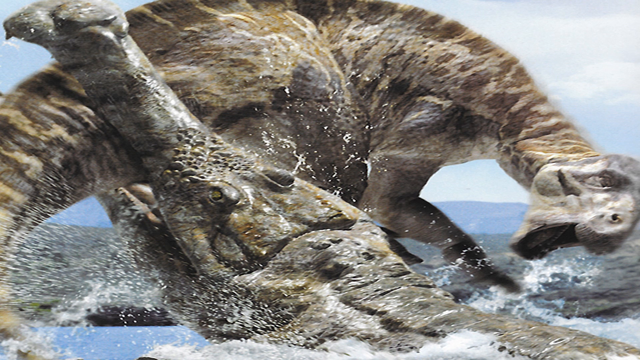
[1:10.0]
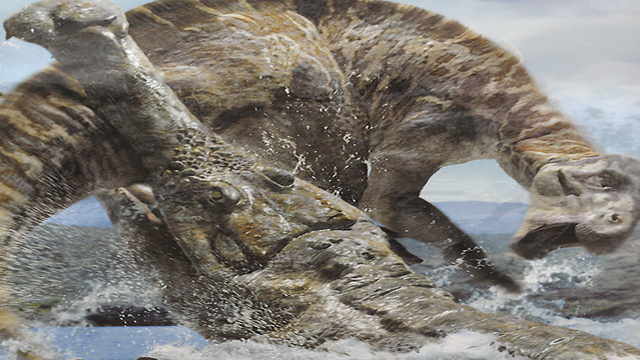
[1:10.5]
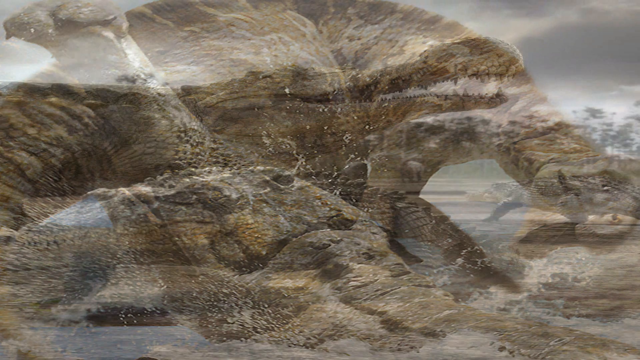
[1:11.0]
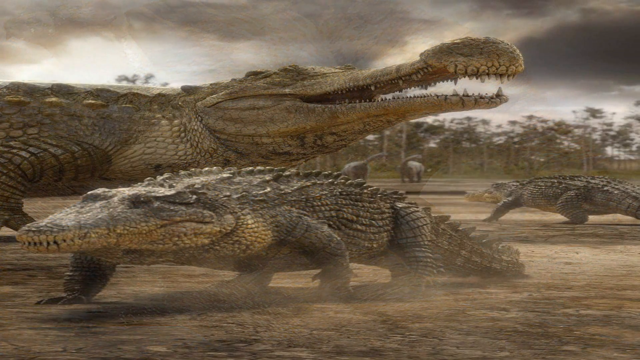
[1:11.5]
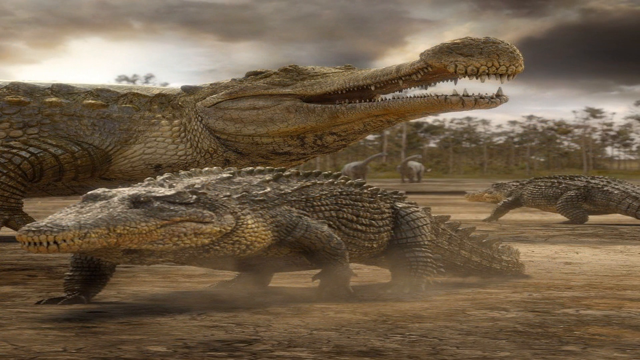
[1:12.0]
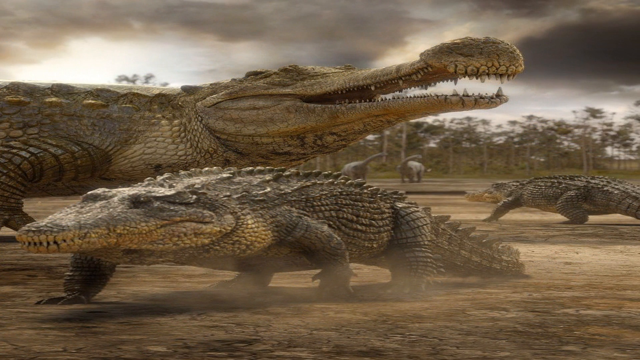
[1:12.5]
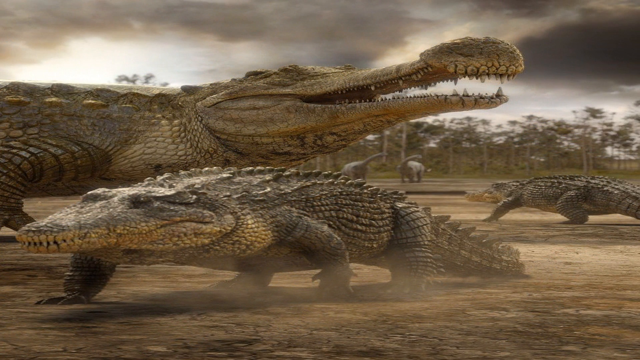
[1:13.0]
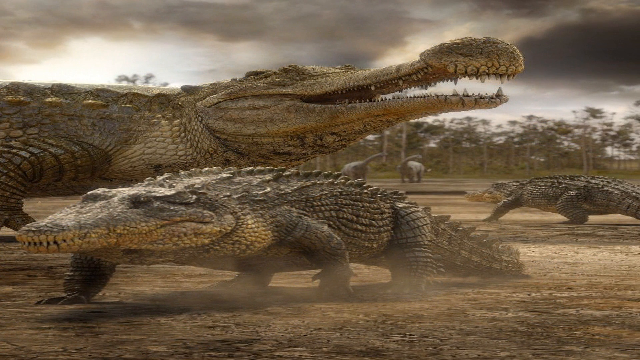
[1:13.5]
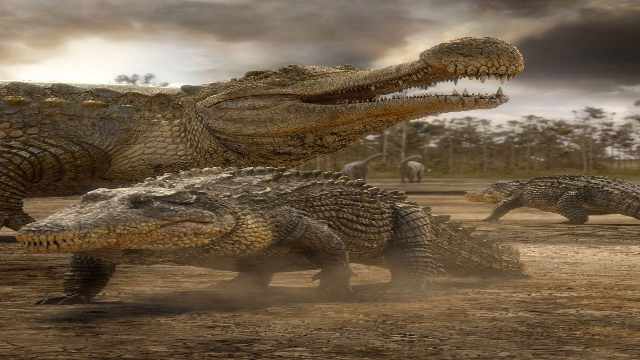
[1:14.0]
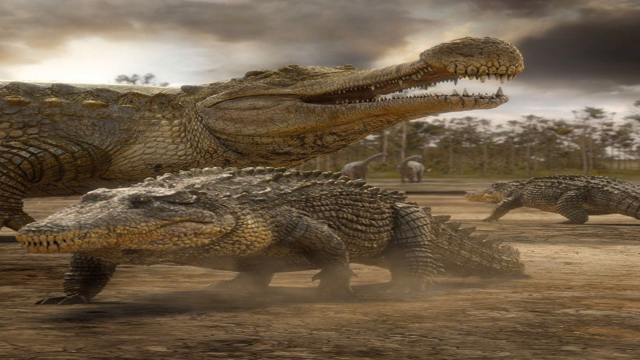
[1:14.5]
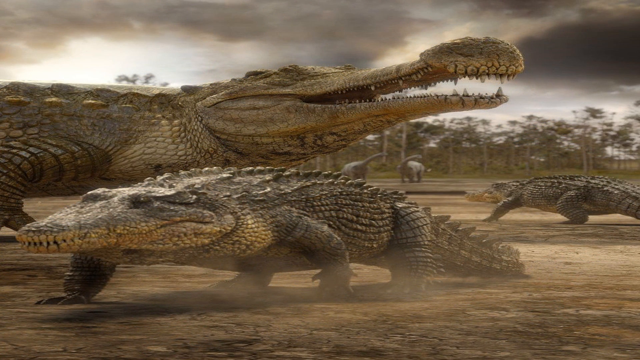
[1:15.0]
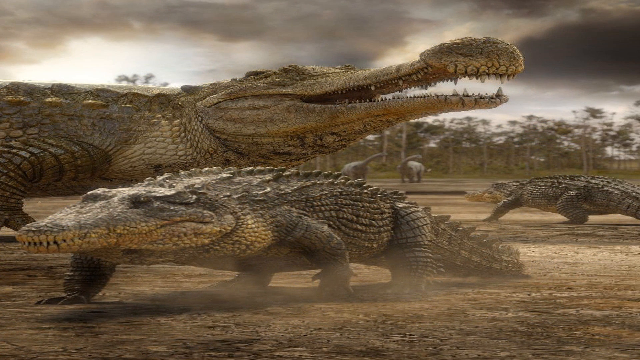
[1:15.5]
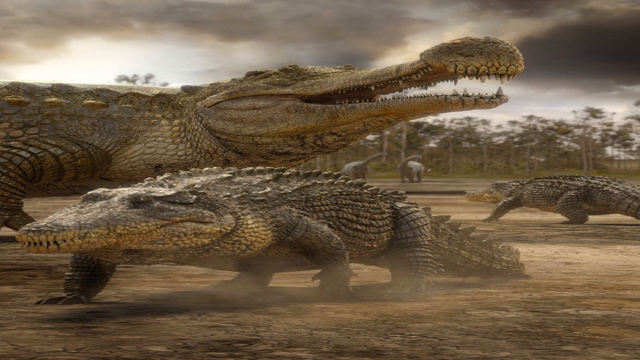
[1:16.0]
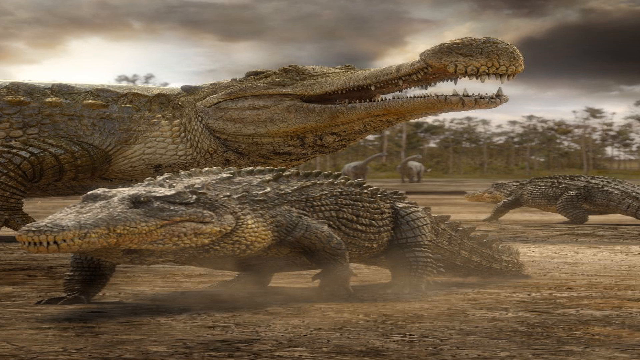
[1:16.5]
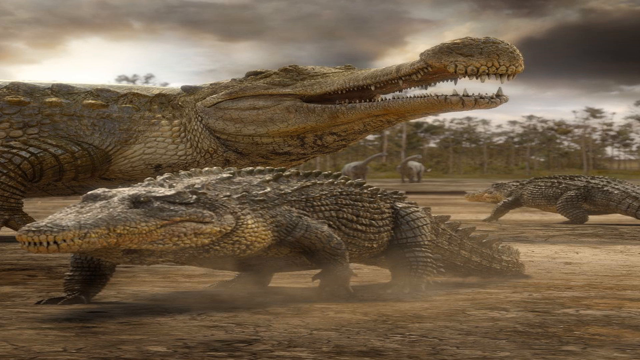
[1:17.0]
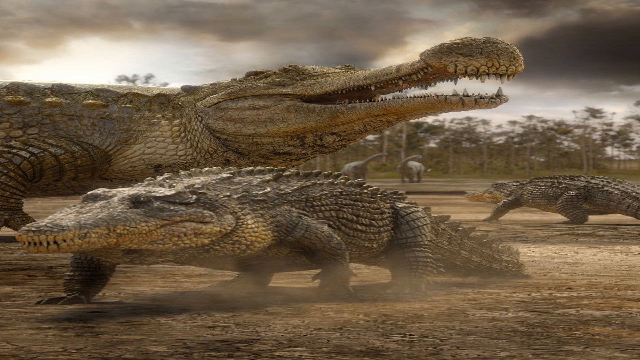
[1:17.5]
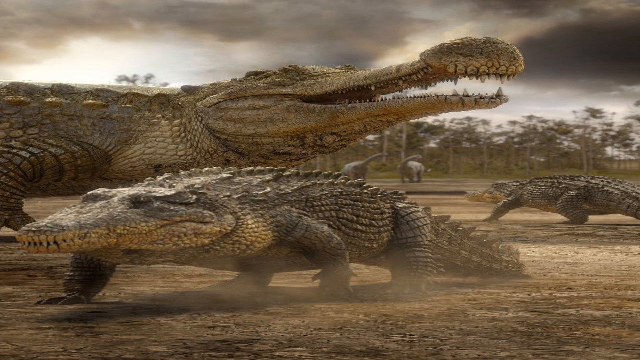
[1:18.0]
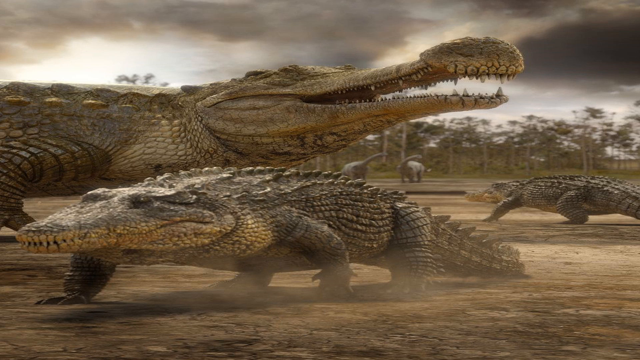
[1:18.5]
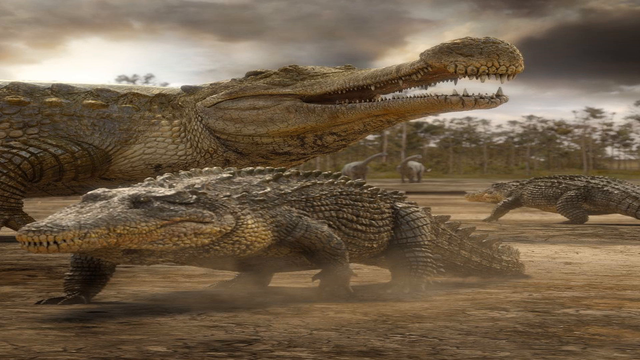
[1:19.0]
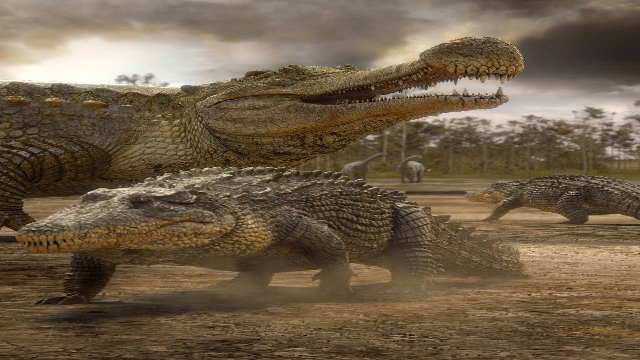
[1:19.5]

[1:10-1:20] The drawing shows the crocodile coming up out of the water and biting down on the tail of what appears to be some sort of dinosaur that has come down into the water. The haunch of the dinosaur's back leg is visible to the right of the crocodile's head, and the upper shoulder and neck of the dinosaur are also visible, in pale brown, cream and tan colors; they do not quite match the design on the tail. The still image then changes back to the still image of the small crocodile walking off the left of the frame, up underneath the head, apparently, of the large crocodile, which is walking behind it.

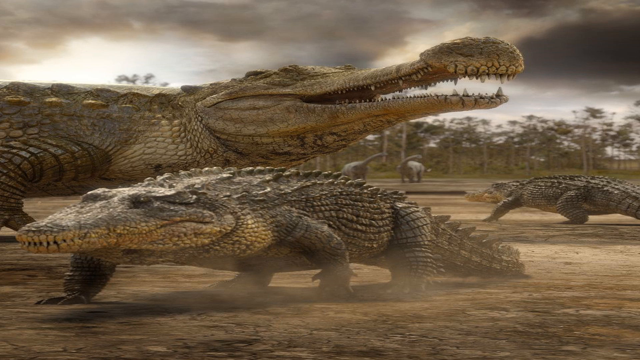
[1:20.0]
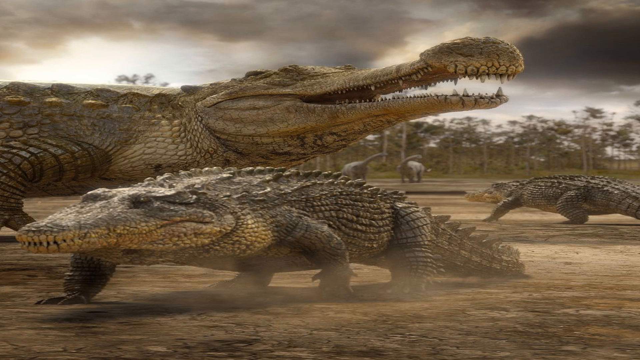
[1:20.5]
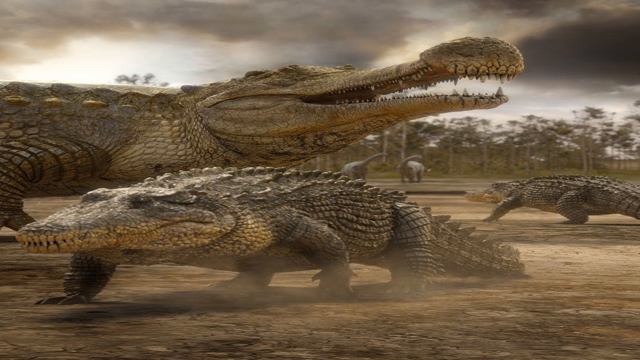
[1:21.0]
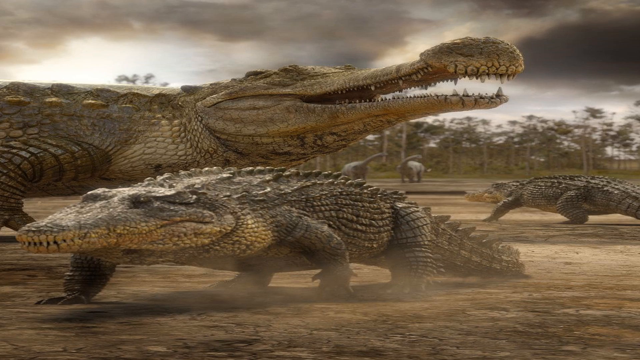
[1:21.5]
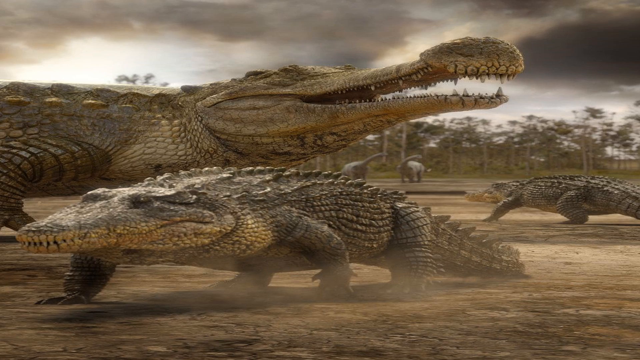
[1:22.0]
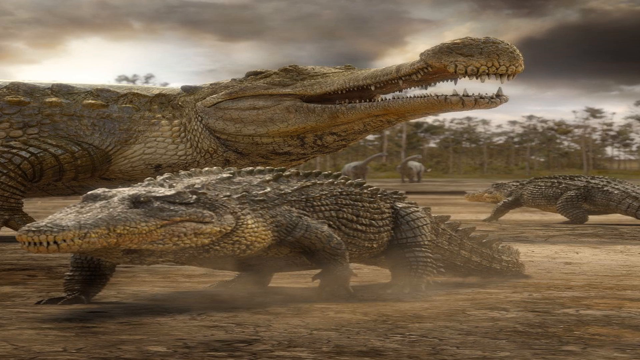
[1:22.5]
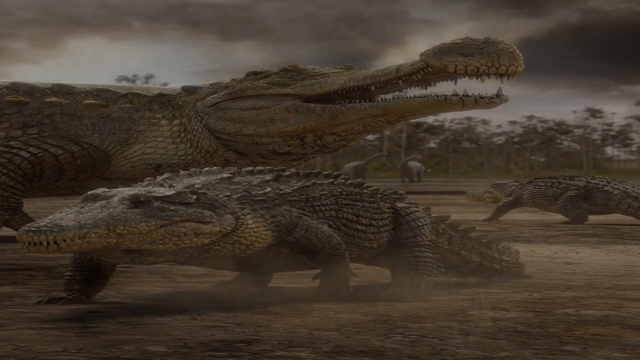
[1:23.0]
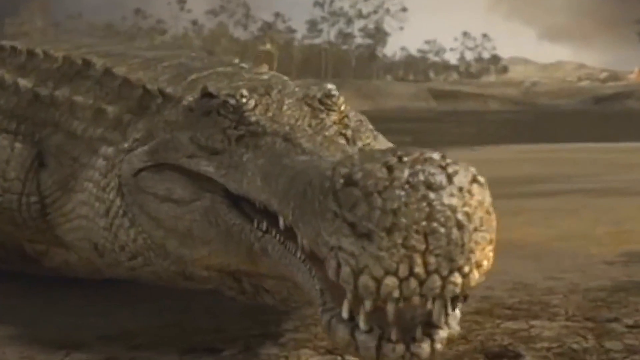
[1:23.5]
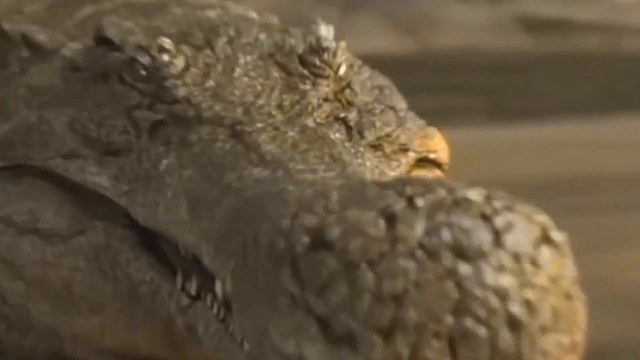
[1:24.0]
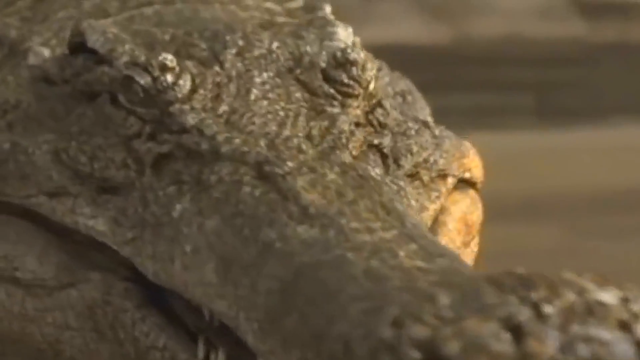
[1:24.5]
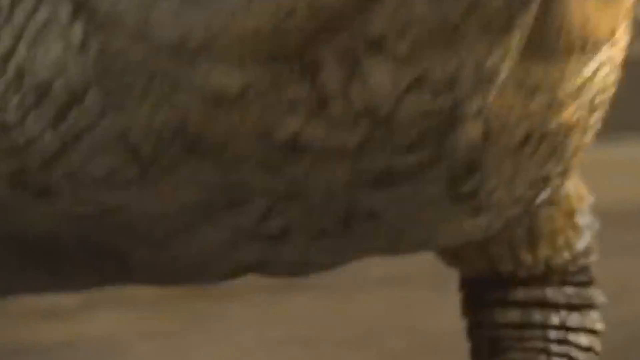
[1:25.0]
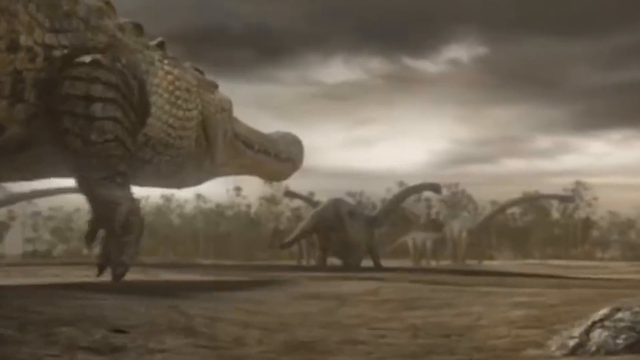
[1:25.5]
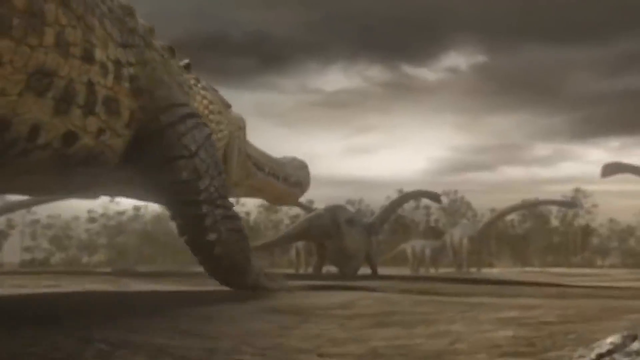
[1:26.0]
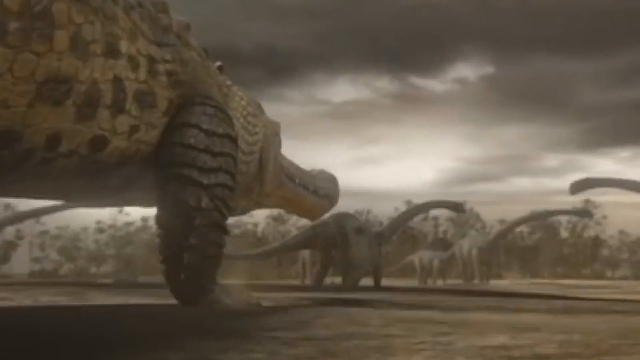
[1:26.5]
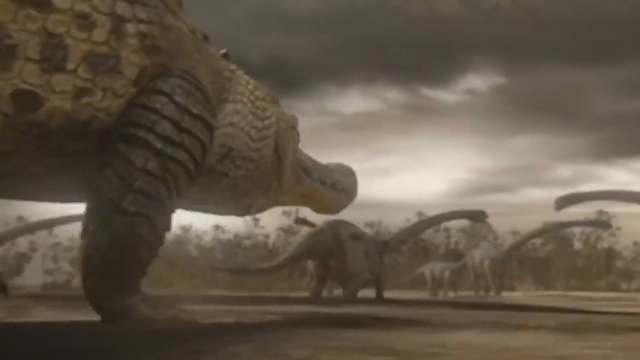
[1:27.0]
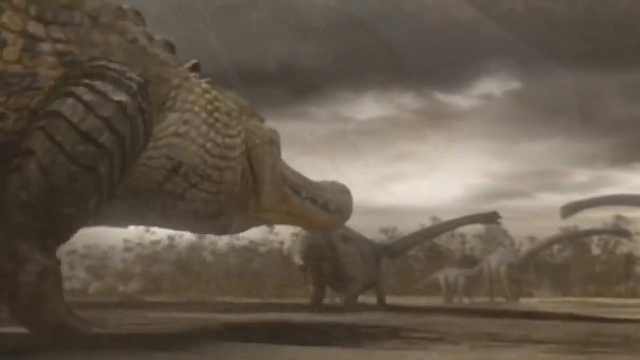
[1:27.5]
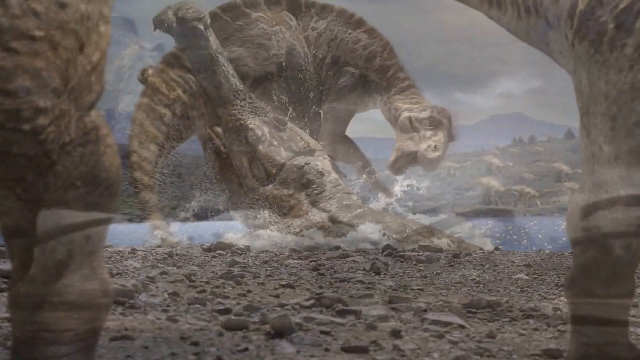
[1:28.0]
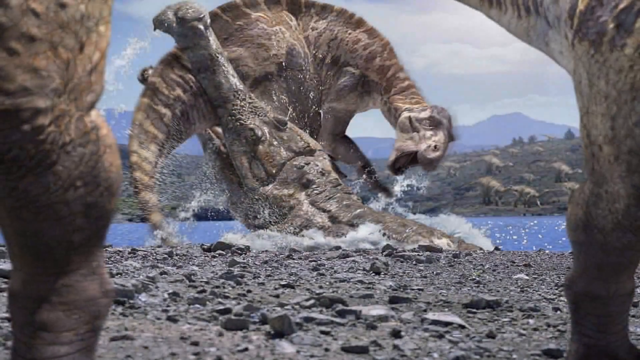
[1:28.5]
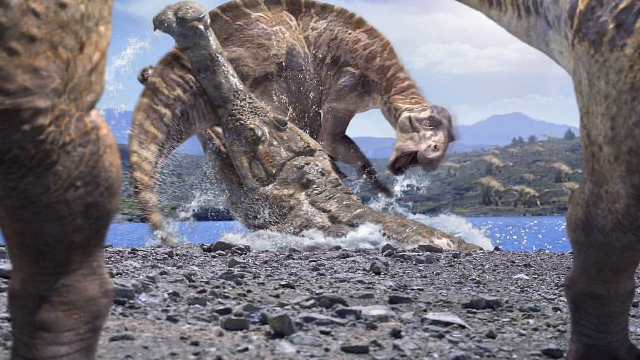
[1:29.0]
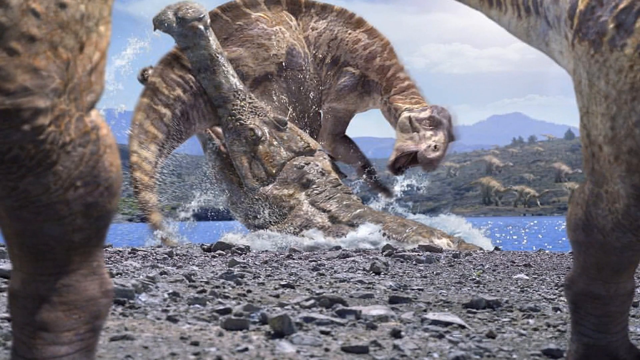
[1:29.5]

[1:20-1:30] The still image of the crocodiles walking is followed by what appears to be the crocodile that was walking toward the dinosaurs. It lowers itself down to the ground, face pointing directly at the camera in close-up. Its snout does not look quite as long and looks a little more realistic, though the eyes still look unconvincing. The crocodile then lifts itself up from the dusty ground and walks toward three or four large dinosaurs with long tails and necks.